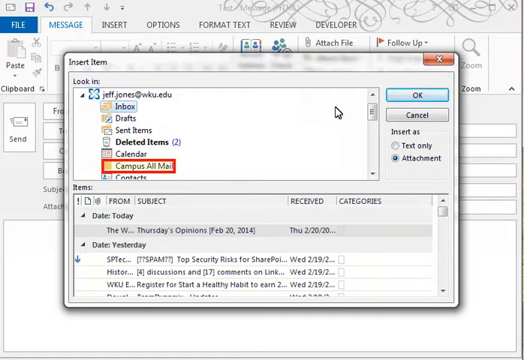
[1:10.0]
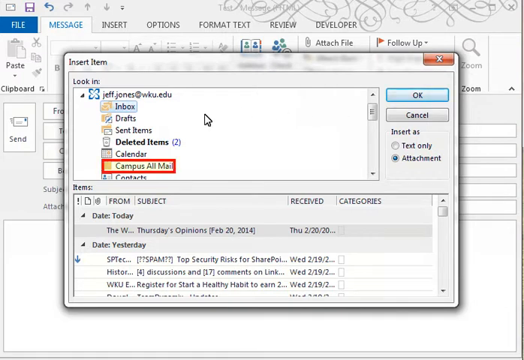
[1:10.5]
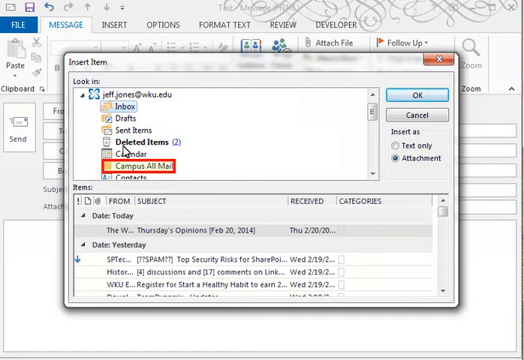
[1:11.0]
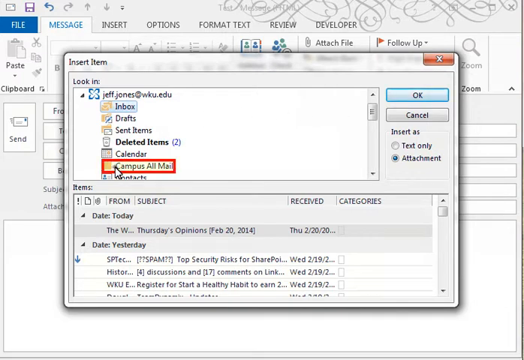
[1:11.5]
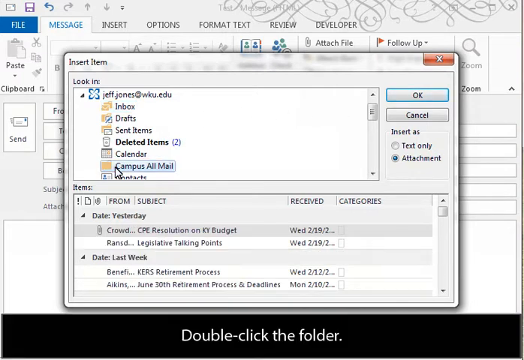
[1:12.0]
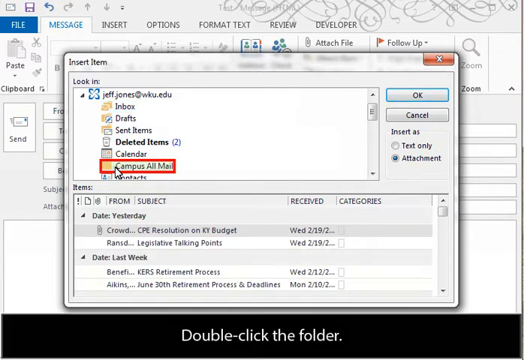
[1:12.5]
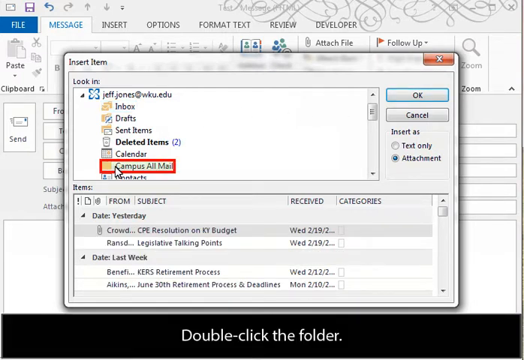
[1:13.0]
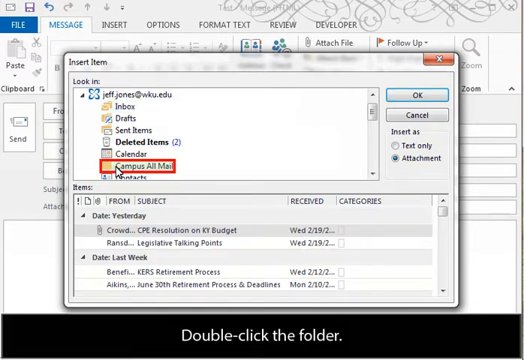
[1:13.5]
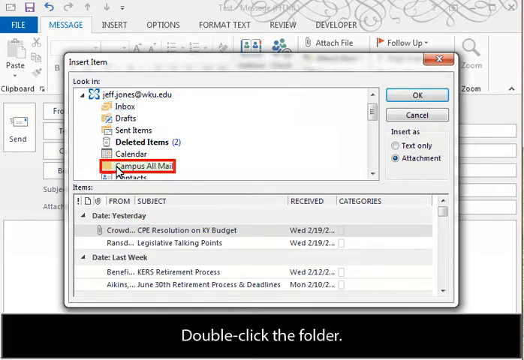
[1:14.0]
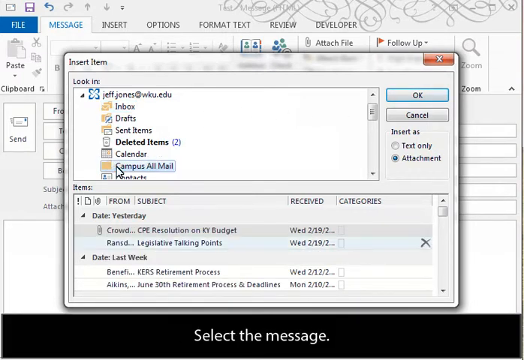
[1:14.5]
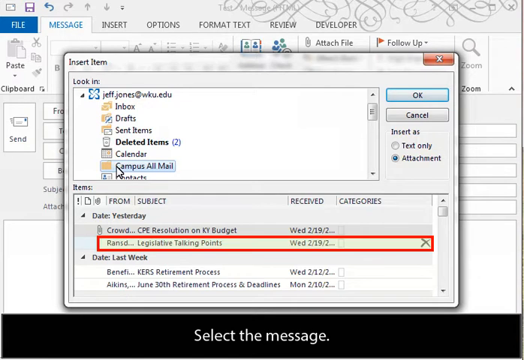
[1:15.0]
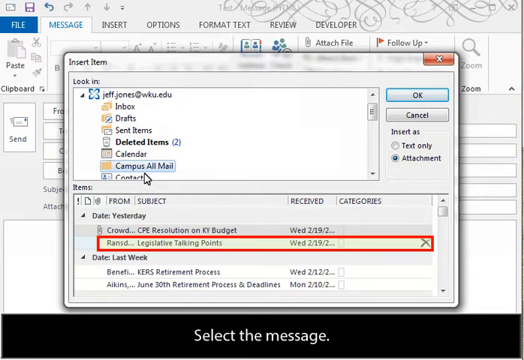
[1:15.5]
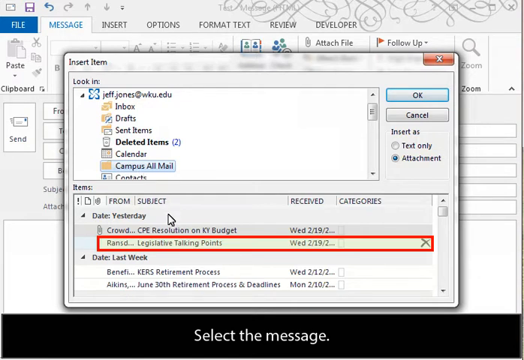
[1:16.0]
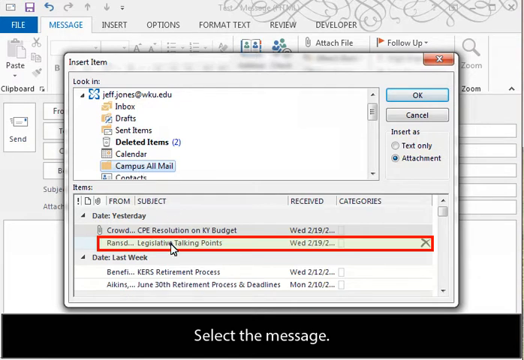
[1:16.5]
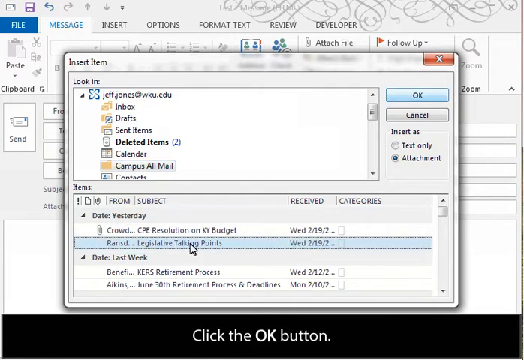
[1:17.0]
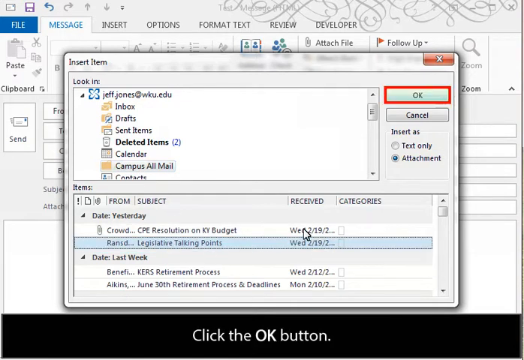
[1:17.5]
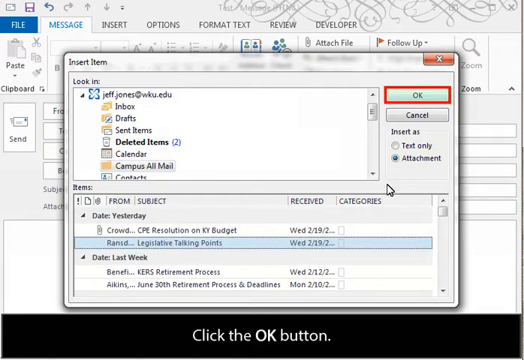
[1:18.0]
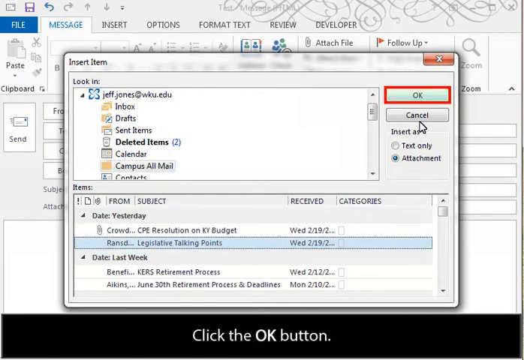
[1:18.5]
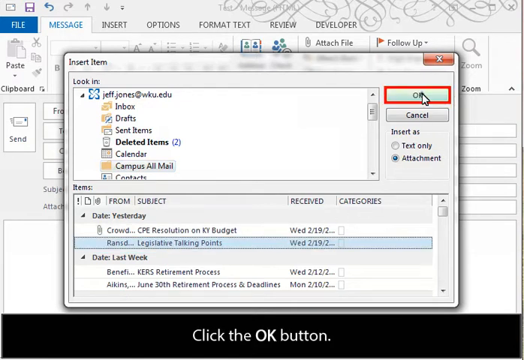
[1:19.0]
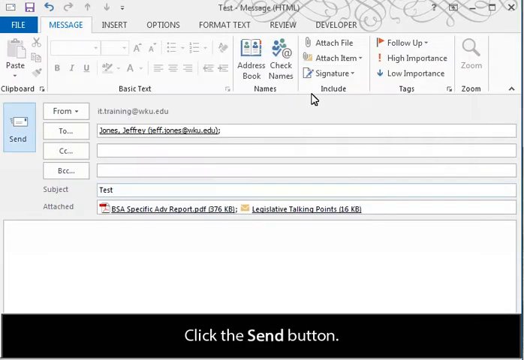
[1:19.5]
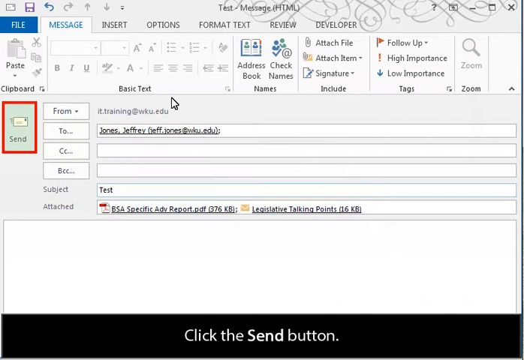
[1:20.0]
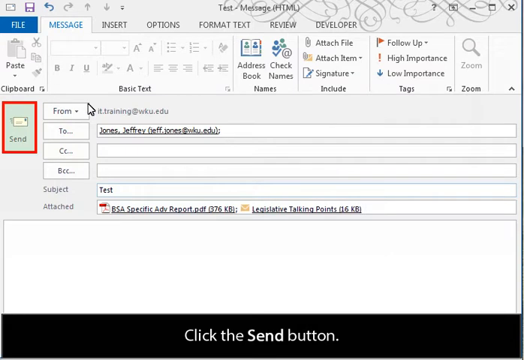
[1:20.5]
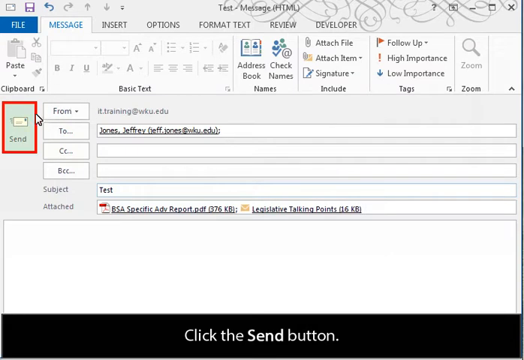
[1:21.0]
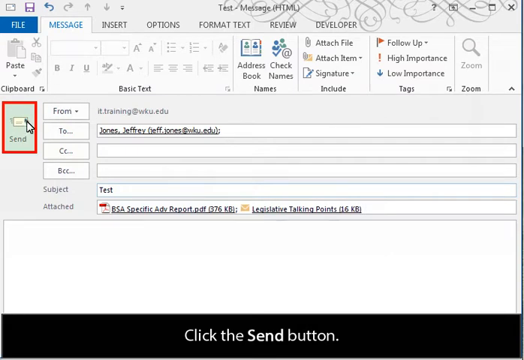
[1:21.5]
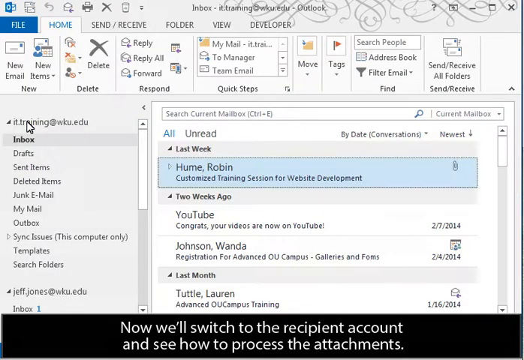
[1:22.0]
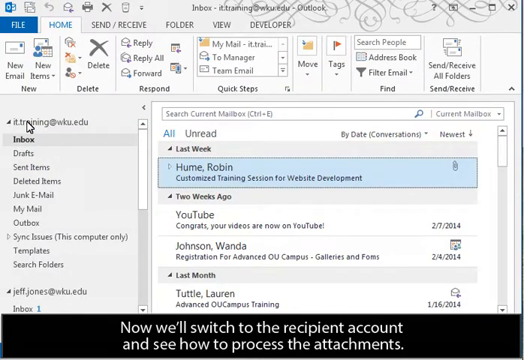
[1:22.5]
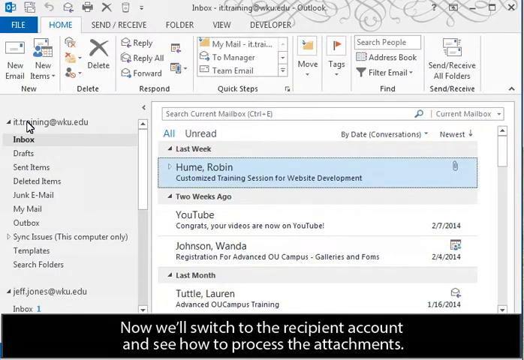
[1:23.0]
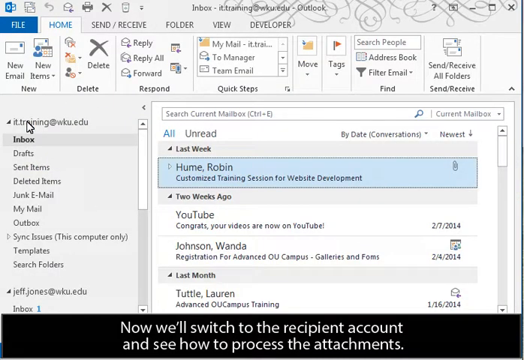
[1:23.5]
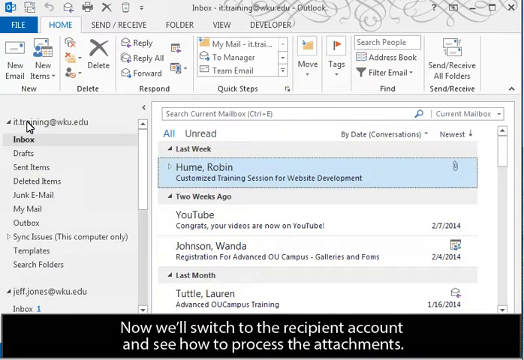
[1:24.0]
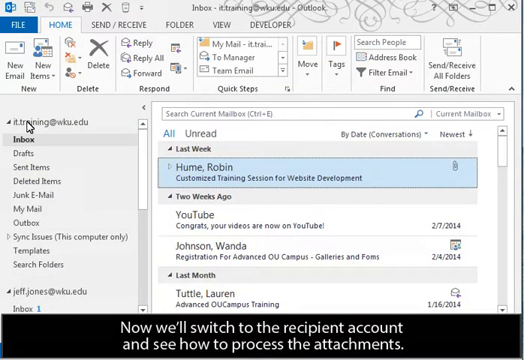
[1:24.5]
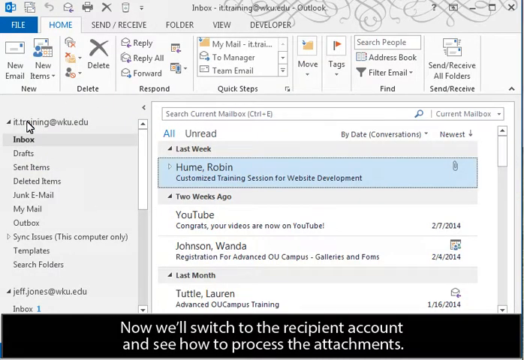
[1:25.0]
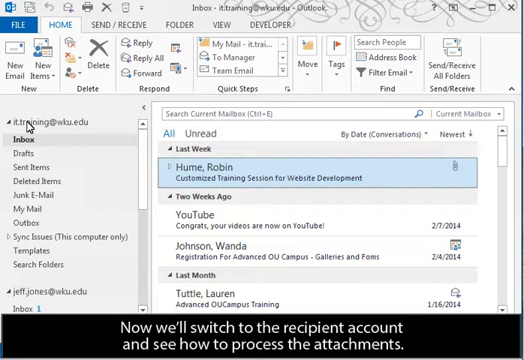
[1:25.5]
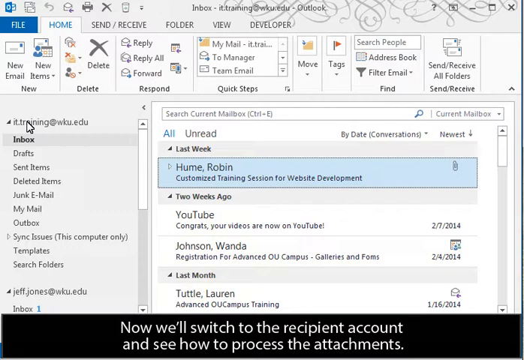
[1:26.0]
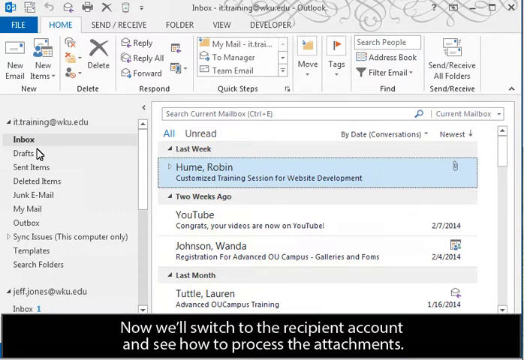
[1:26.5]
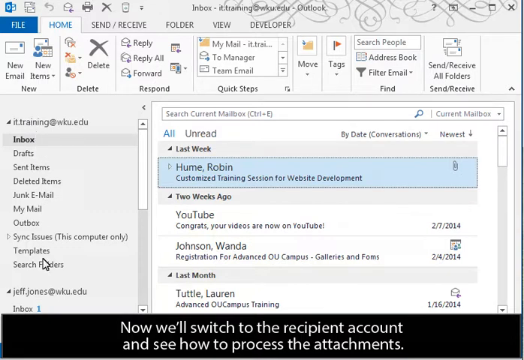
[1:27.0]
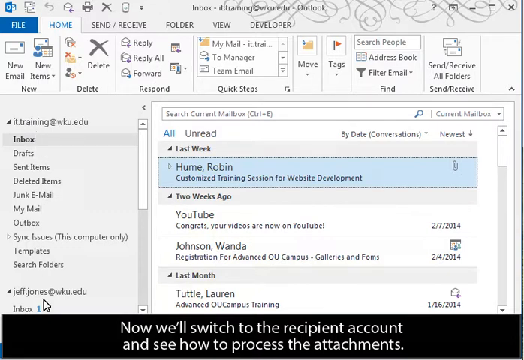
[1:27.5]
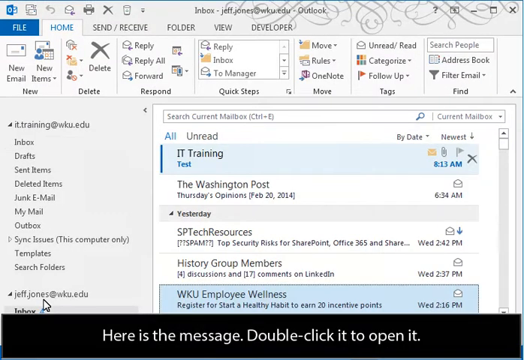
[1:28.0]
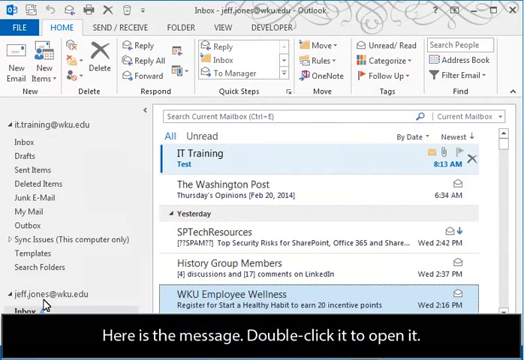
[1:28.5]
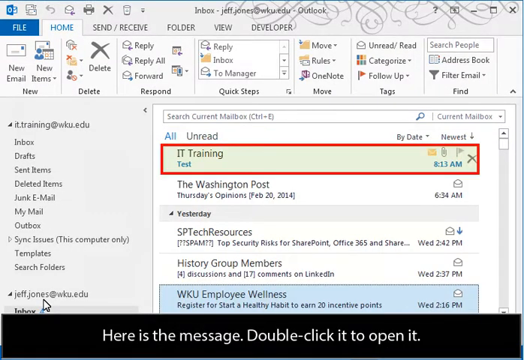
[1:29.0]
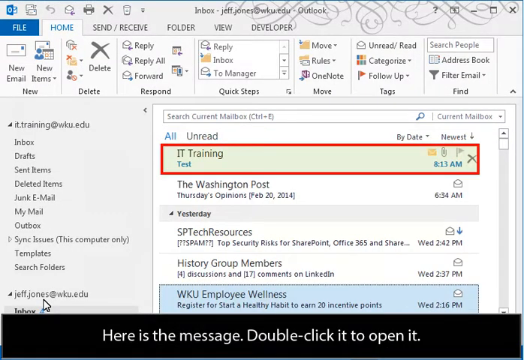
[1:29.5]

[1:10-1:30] In the open insert item window, the Campus All Mail folder is highlighted with a red square, and the cursor double-clicks it. In the items panel below, the second option, reading "ransd legislative talking points," is highlighted with a red square. The user clicks it, which highlights the whole line in light blue. The OK button at the top right of the window is highlighted with a red square, and the cursor clicks it, returning to the open email message. The attached box shows that the legislative talking points file has also been added to the email. The Send button at the top left of the screen is highlighted with a red square, and the user clicks send. The user is taken back to the Outlook inbox, where the first email in the list on the right is highlighted with a red square and has the title "IT Training Test."